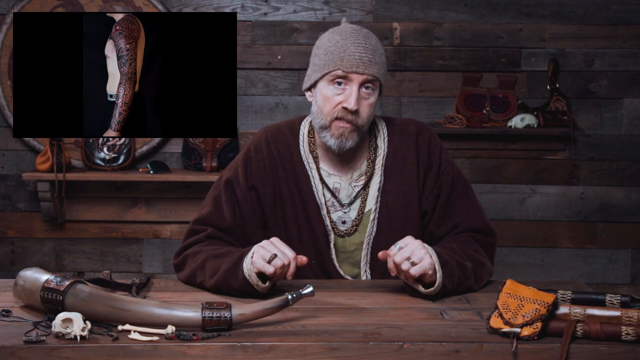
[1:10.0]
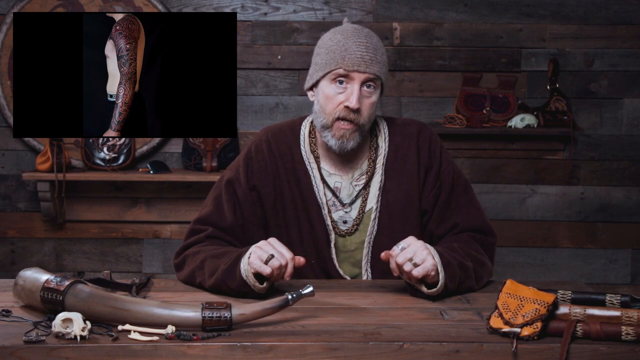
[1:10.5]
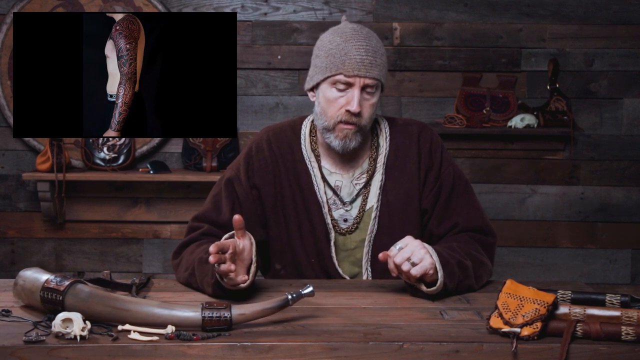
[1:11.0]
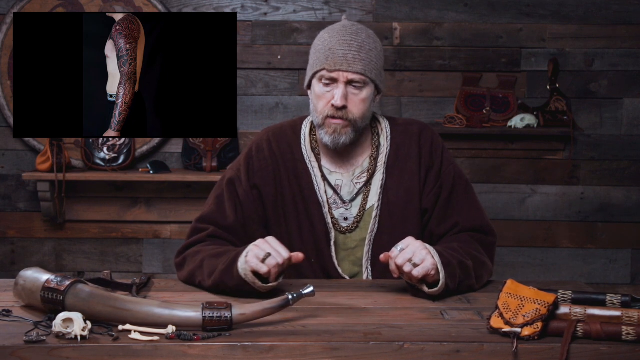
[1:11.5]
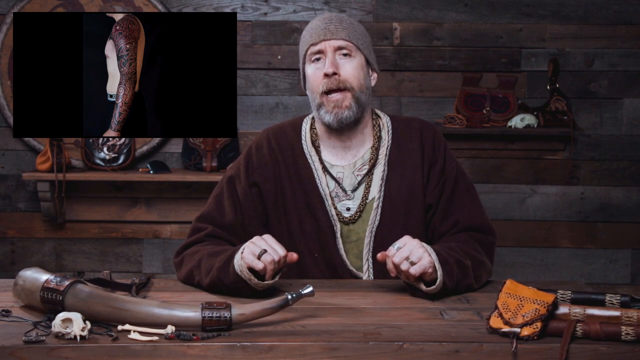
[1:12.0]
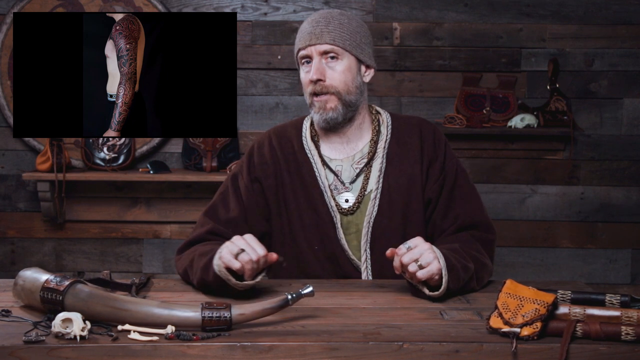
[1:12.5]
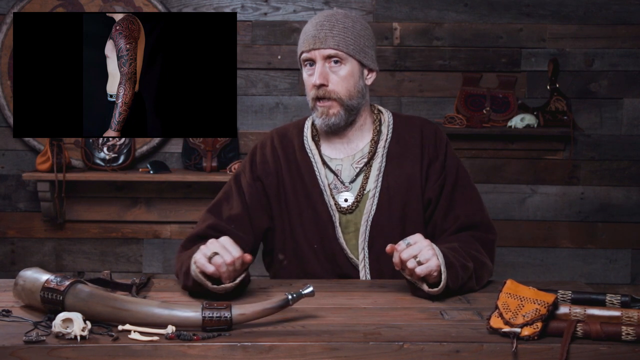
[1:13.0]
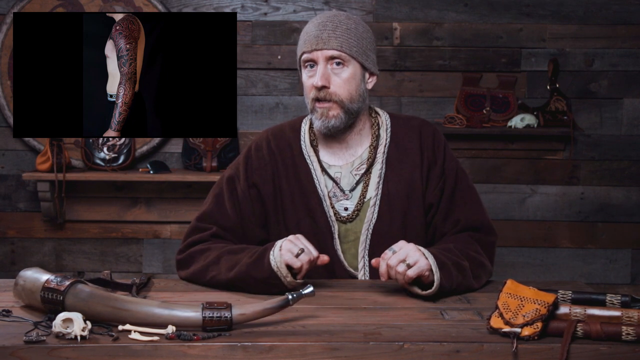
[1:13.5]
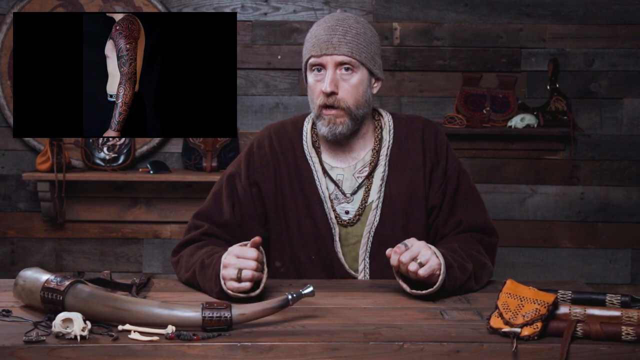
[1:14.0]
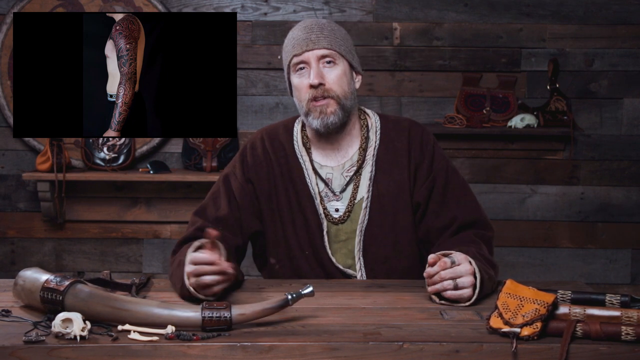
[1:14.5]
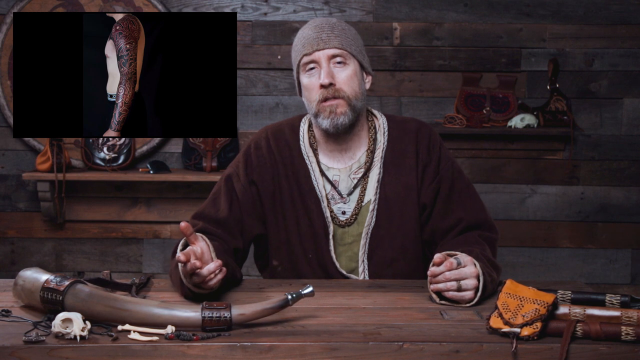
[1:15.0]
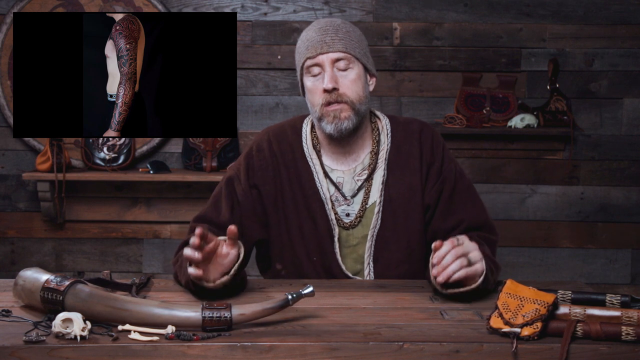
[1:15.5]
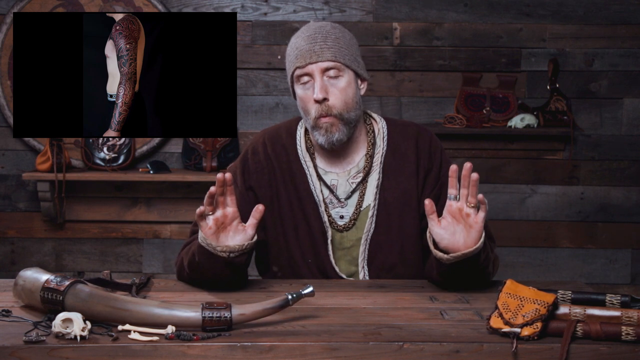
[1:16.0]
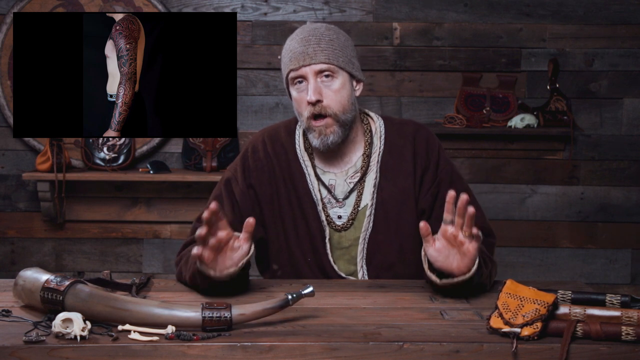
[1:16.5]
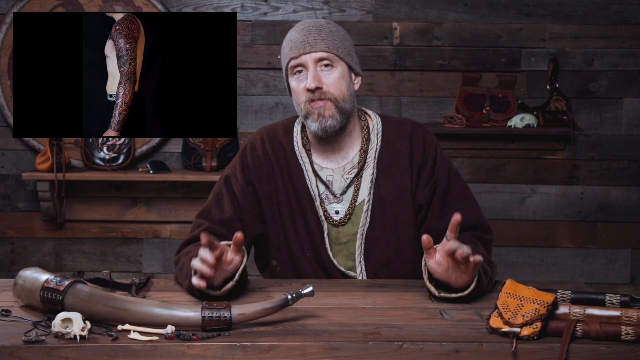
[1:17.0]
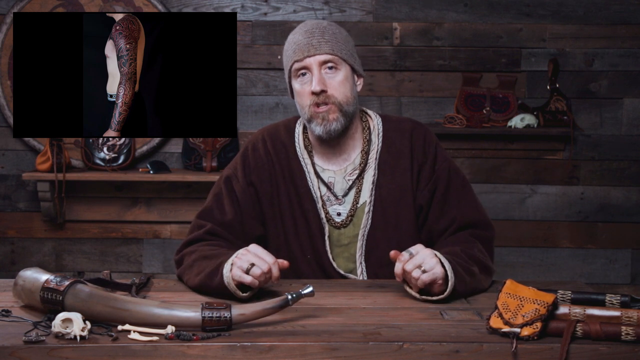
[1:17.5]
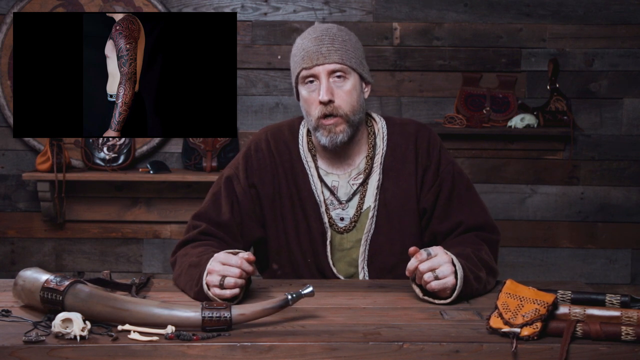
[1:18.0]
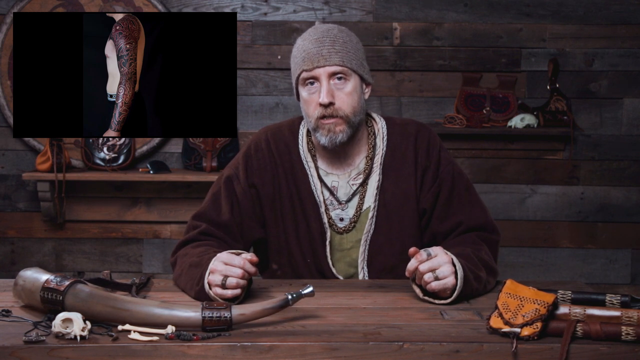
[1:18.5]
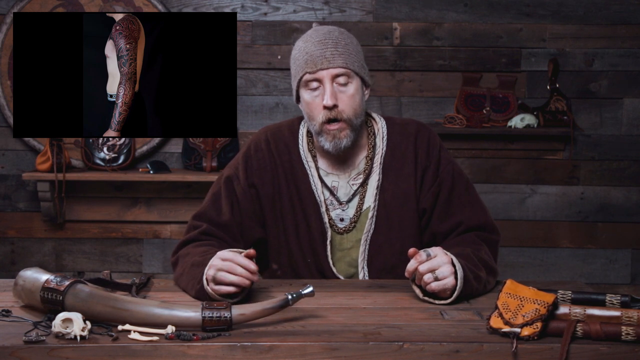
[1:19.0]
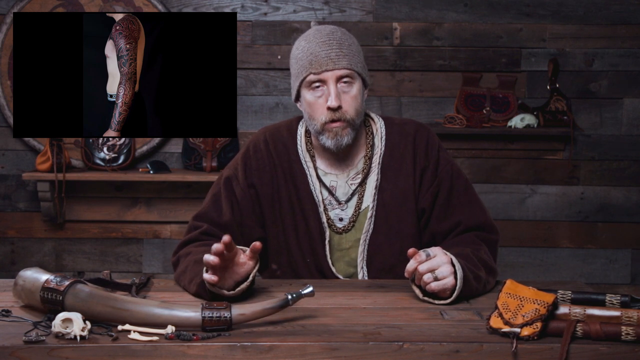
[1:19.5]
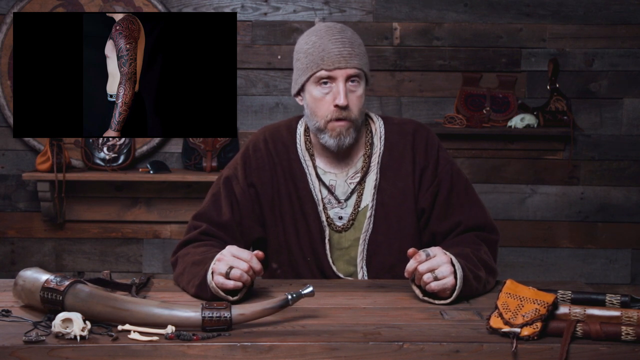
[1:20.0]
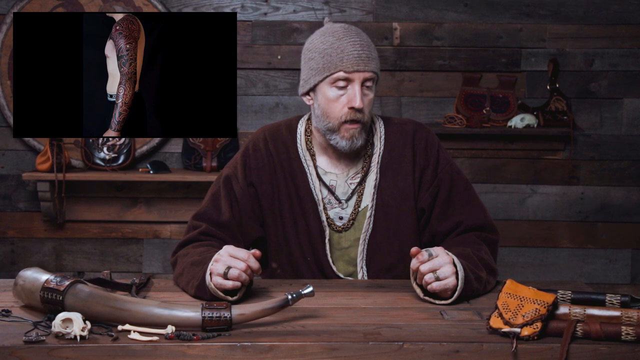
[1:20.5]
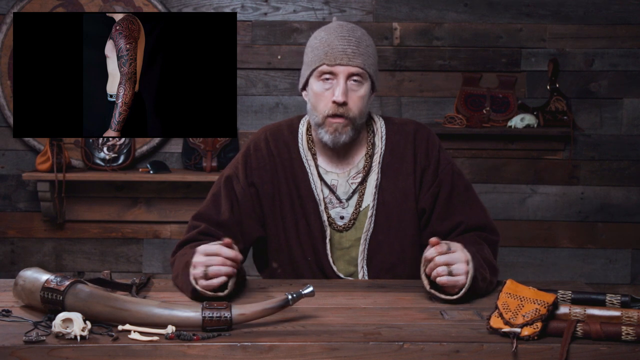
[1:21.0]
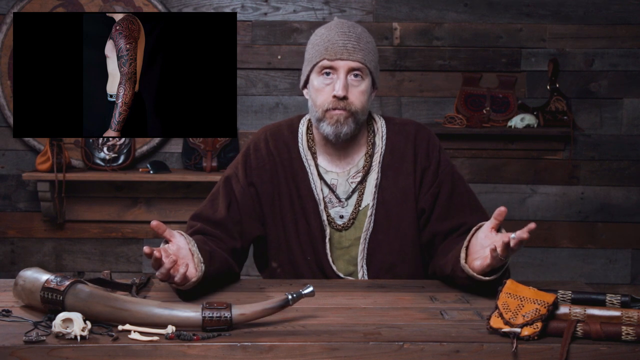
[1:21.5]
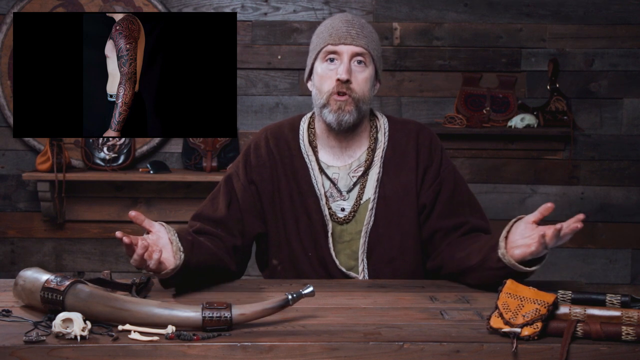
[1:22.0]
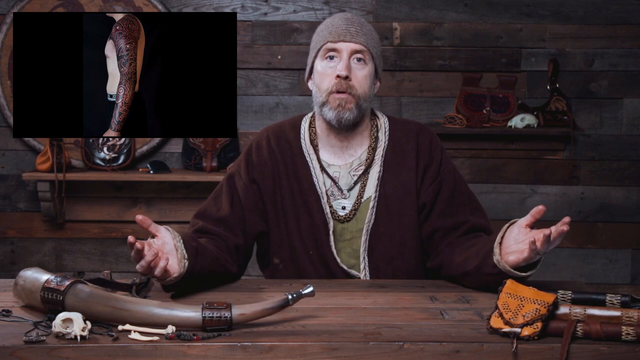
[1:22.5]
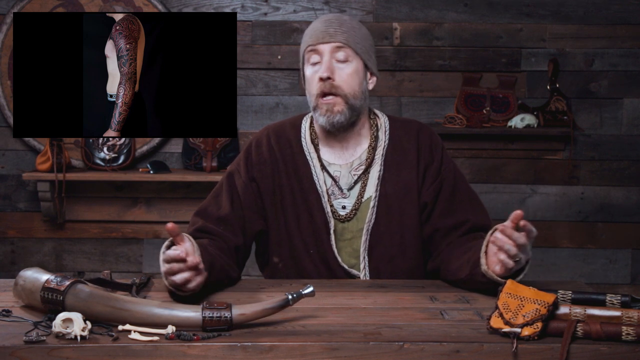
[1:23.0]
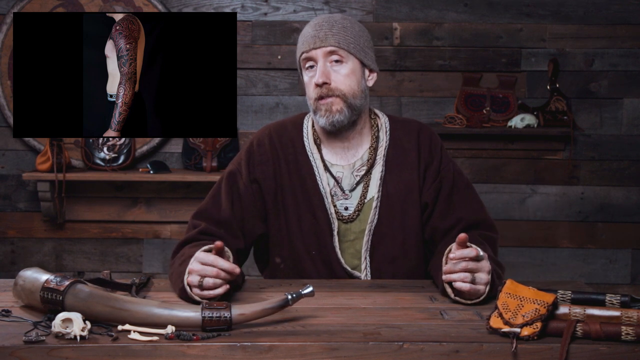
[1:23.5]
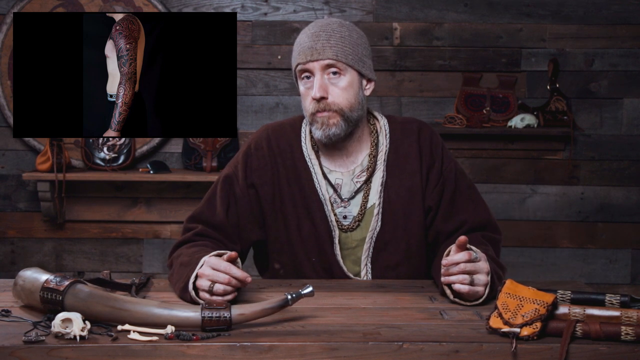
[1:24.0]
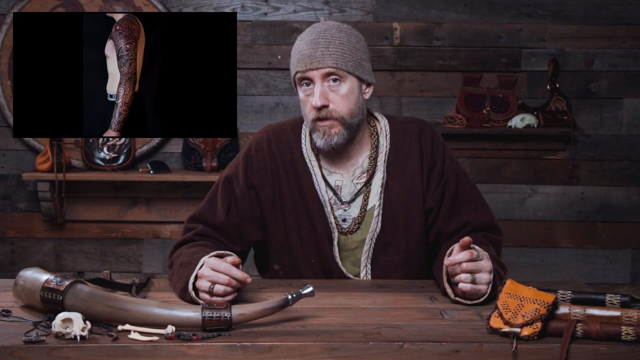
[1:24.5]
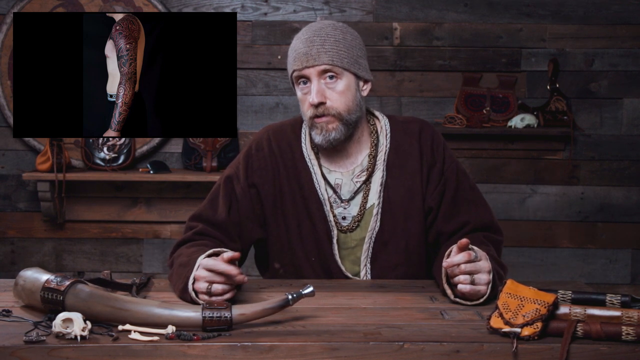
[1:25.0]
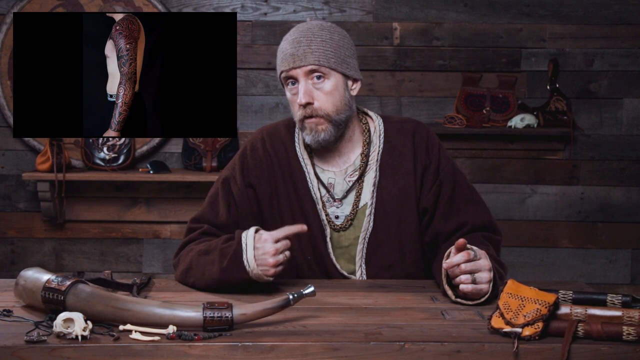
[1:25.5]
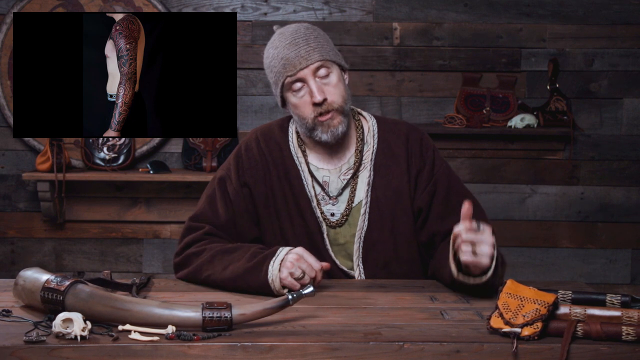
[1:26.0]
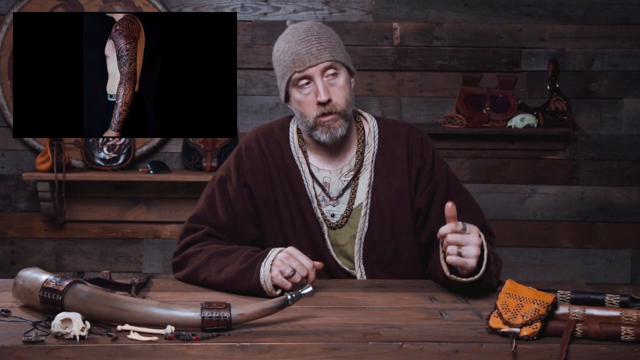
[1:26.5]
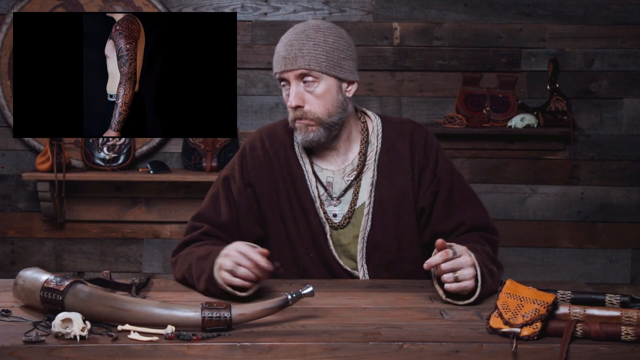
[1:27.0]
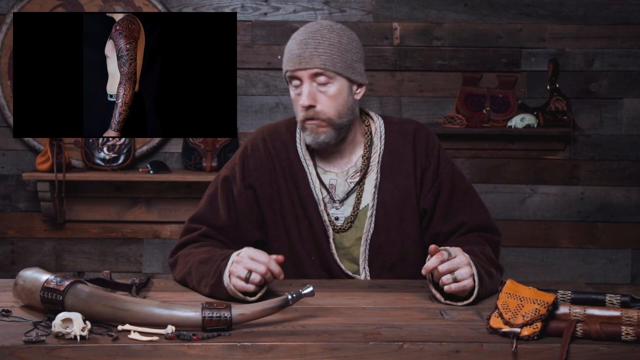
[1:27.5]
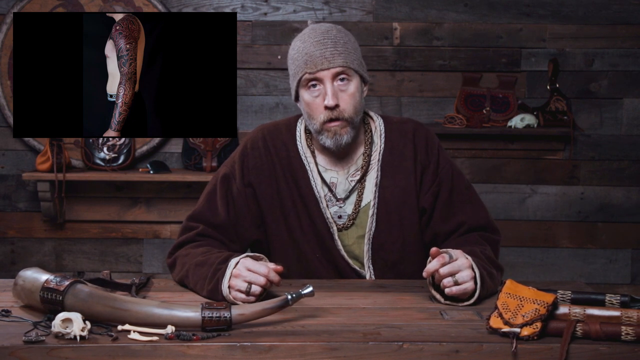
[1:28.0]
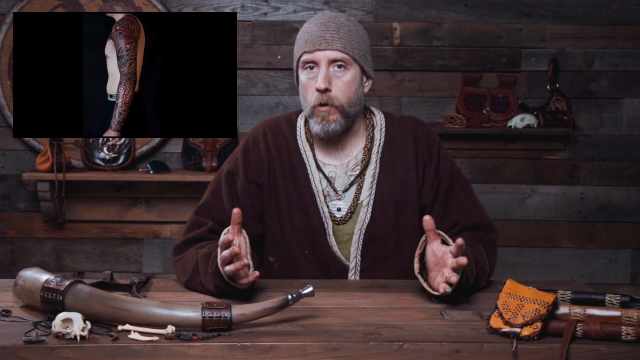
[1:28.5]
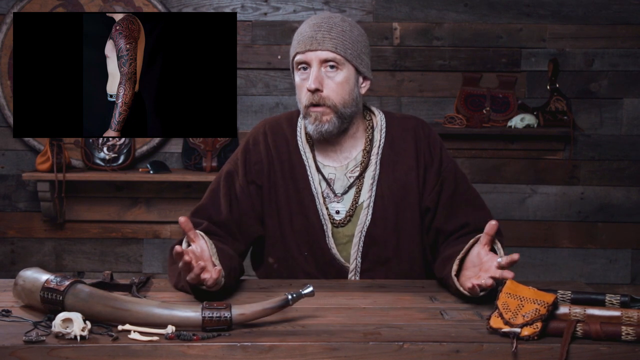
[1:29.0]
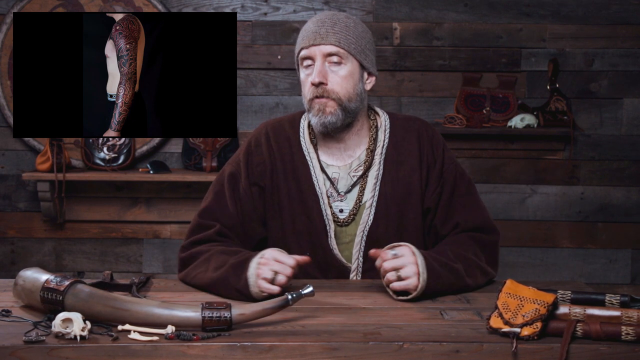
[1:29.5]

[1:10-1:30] A man sits in front of his camera at a wooden desk, with several cultural items to his left and right that seem to be European in nature, maybe Nordic, maybe Gaelic. There is a horn to his left and a small orange bag to his right. Behind him is a wooden wall with visible planks, and there is a shelf to his left and to his right holding bags with the same cultural patterns. In the top left of the screen, sort of a breakout box shows an image of a shirtless person with a tattoo on their left arm and shoulder. The man at the desk talks to the camera. He wears a grey beanie, a maroon robe with a greenish shirt underneath, and an elaborate necklace, and has a grey beard and moustache. He motions his hand slightly as he talks. Occasionally the footage cuts, still showing him but as if a bit has been edited out, so it suddenly stops and starts again. He looks right at the camera, occasionally looking away and returning, and sort of motions his arms slightly. Both elbows are on the table, so his movements are subtle.